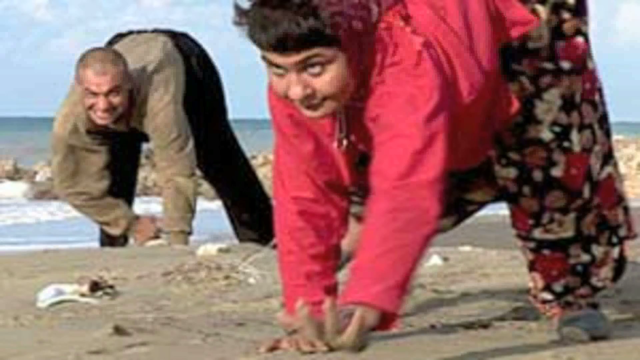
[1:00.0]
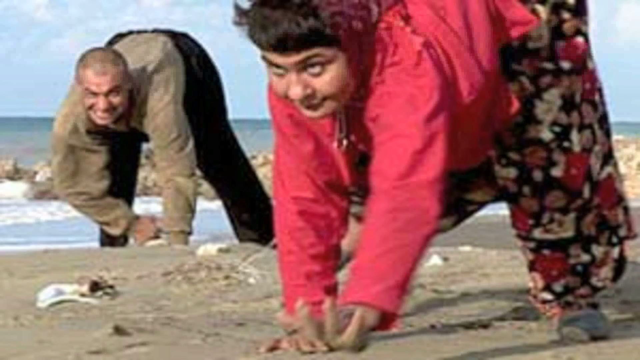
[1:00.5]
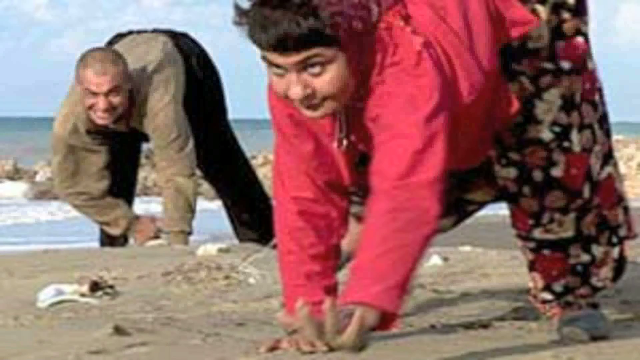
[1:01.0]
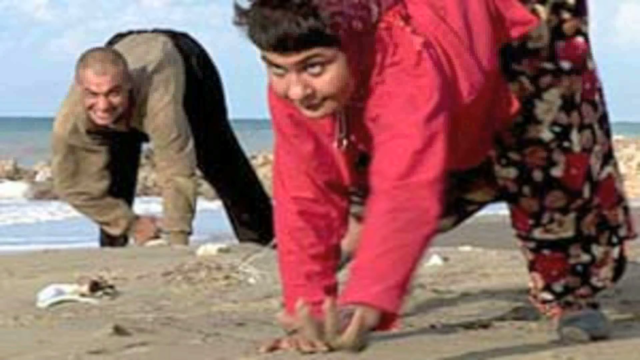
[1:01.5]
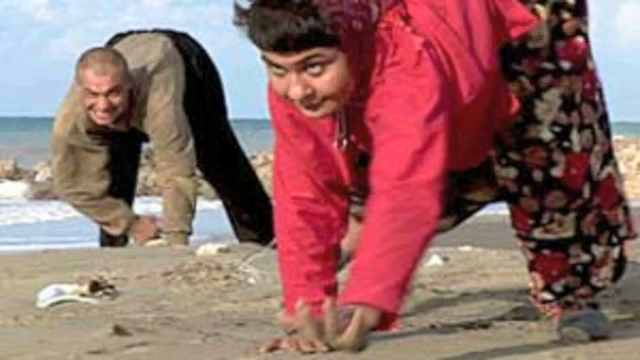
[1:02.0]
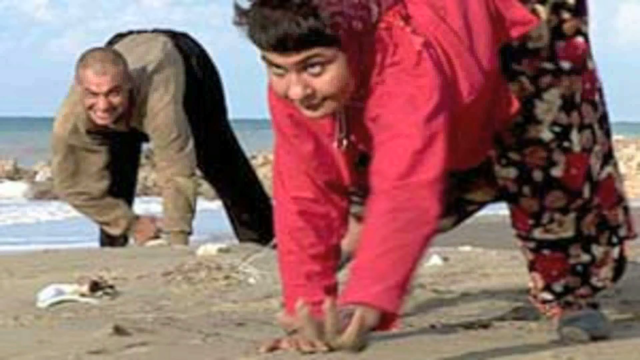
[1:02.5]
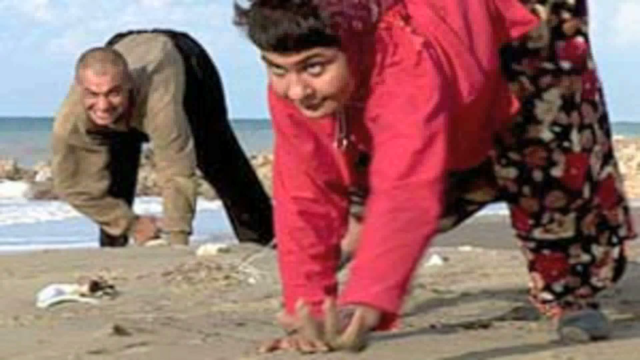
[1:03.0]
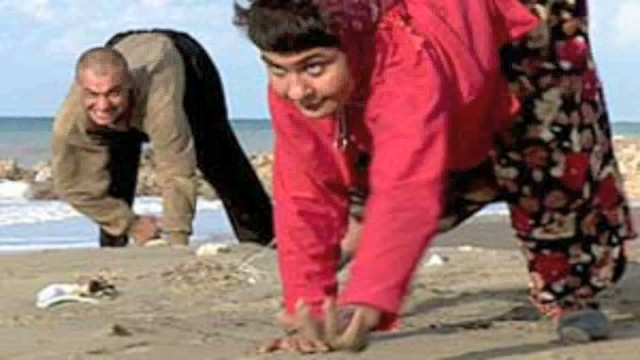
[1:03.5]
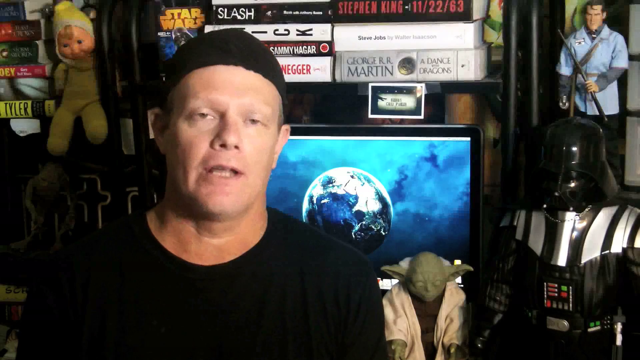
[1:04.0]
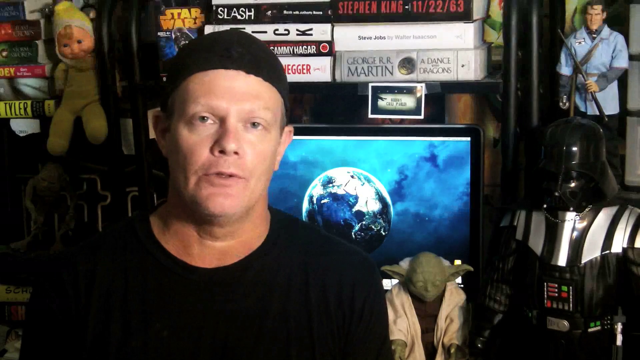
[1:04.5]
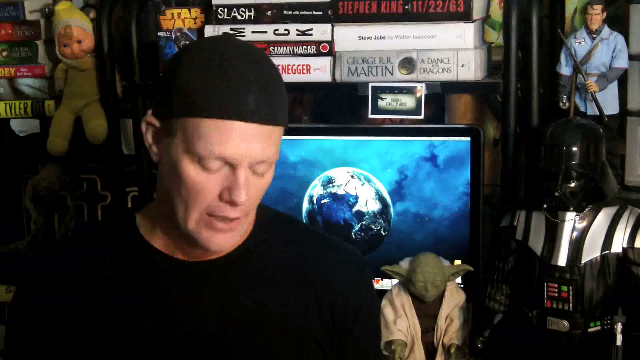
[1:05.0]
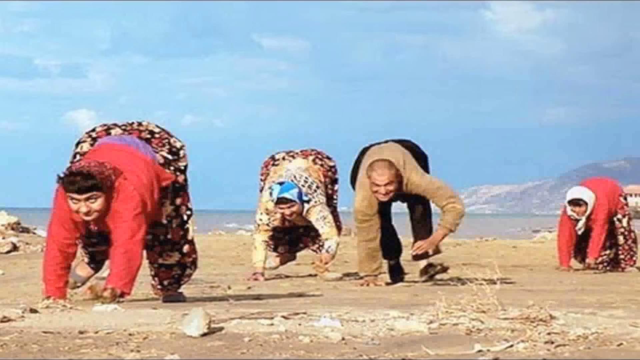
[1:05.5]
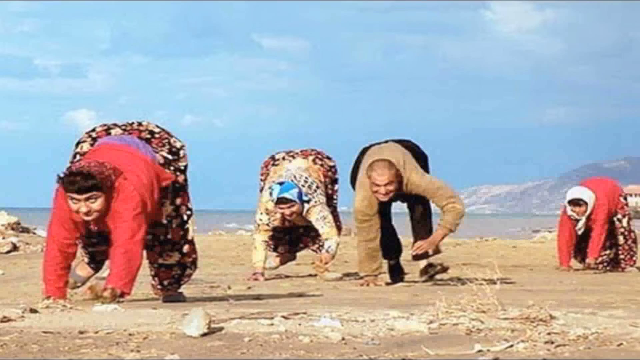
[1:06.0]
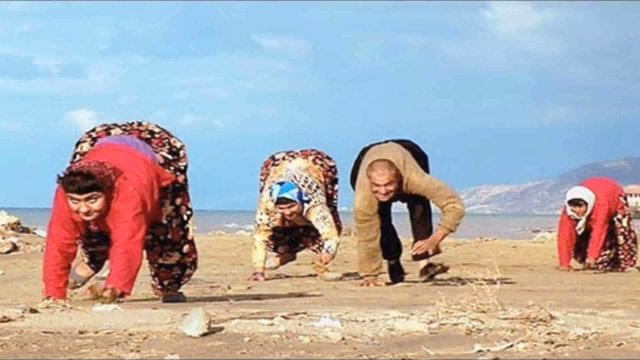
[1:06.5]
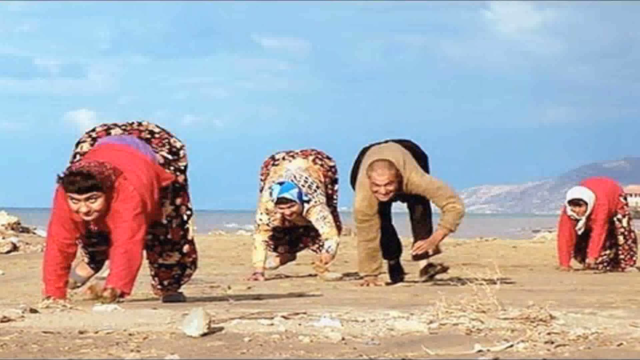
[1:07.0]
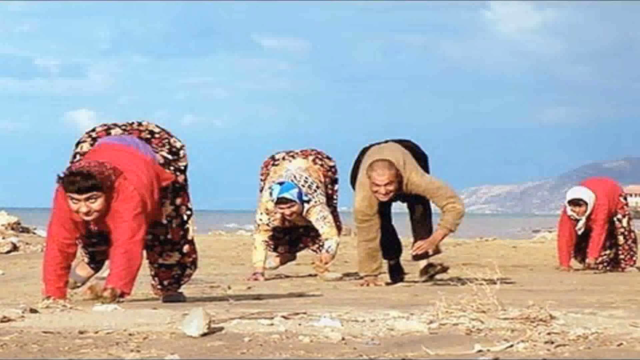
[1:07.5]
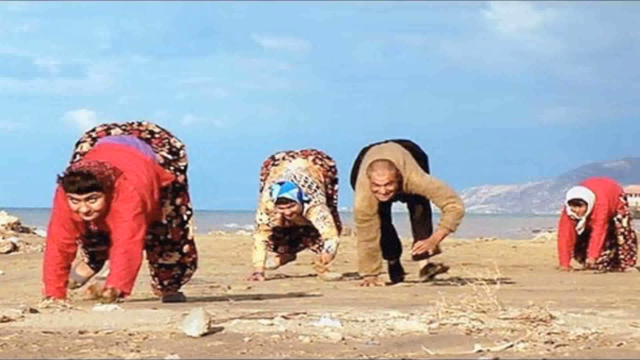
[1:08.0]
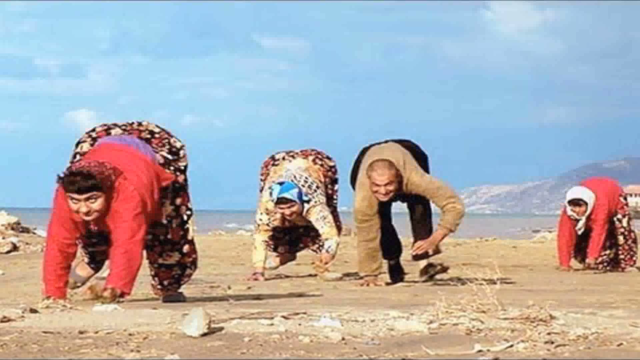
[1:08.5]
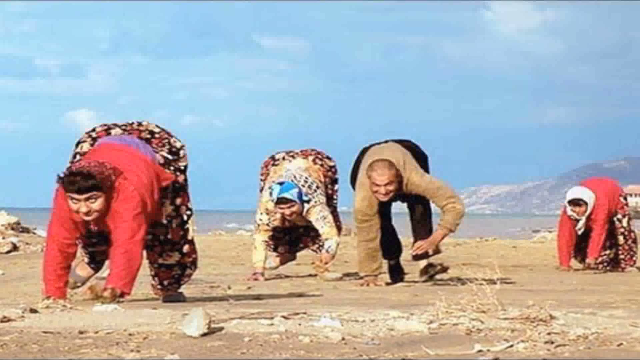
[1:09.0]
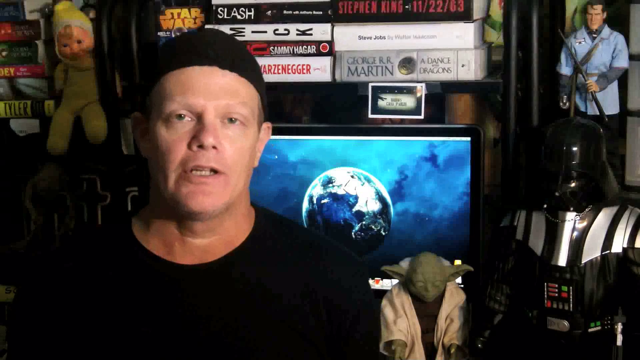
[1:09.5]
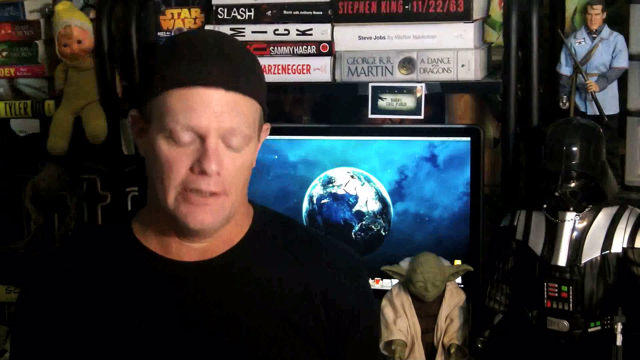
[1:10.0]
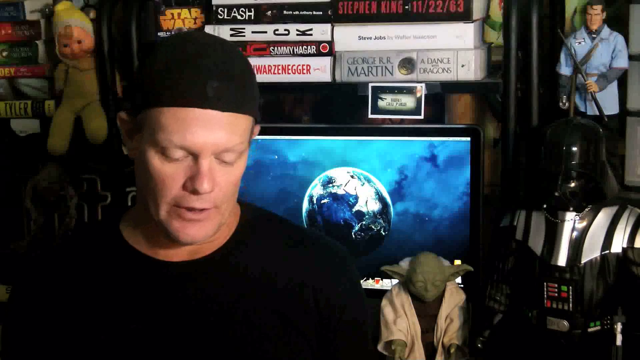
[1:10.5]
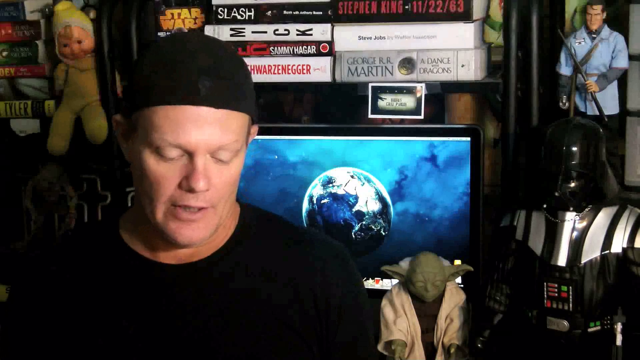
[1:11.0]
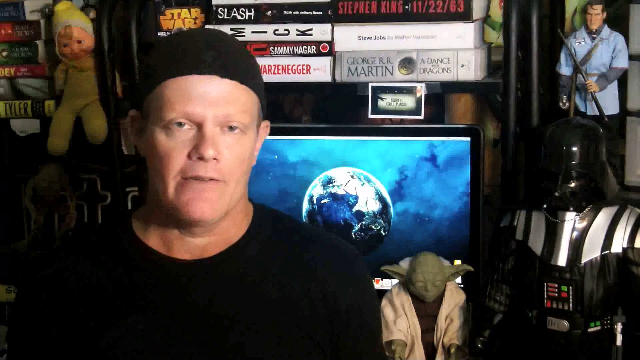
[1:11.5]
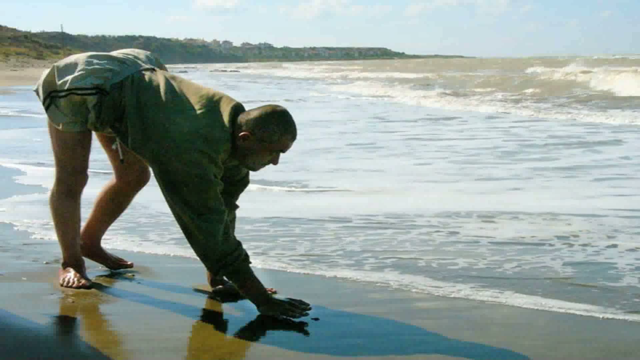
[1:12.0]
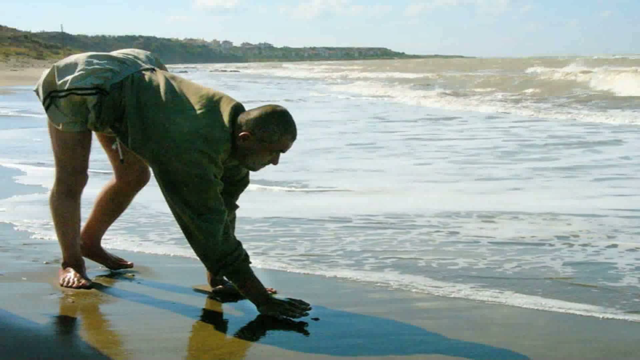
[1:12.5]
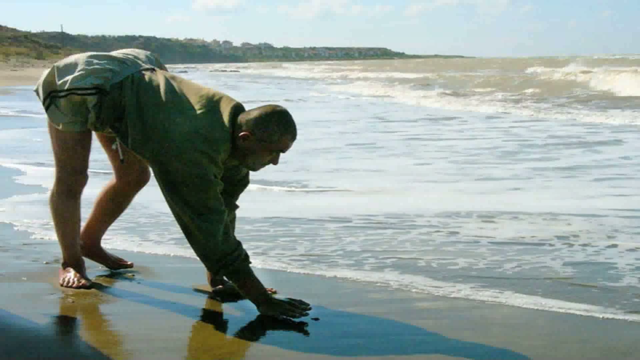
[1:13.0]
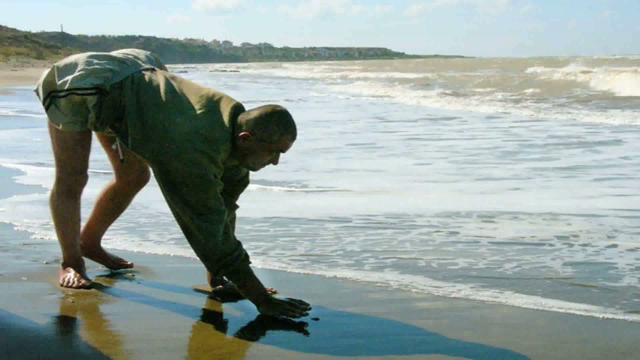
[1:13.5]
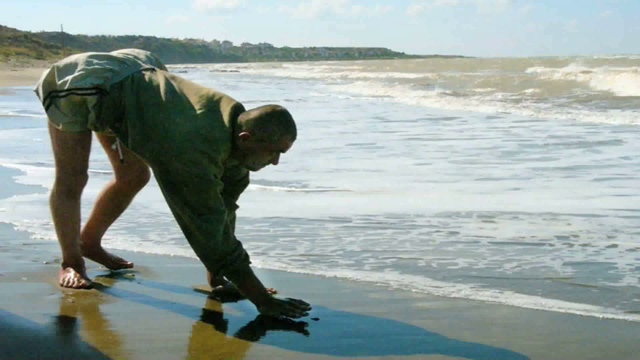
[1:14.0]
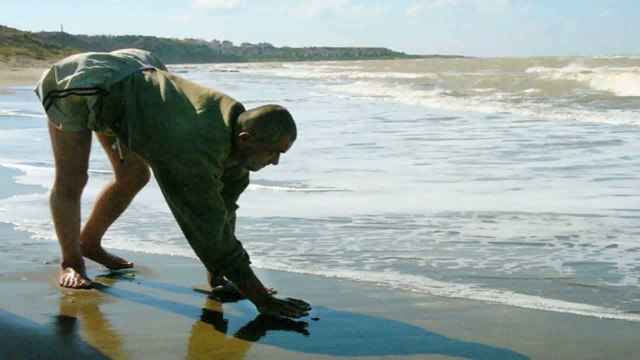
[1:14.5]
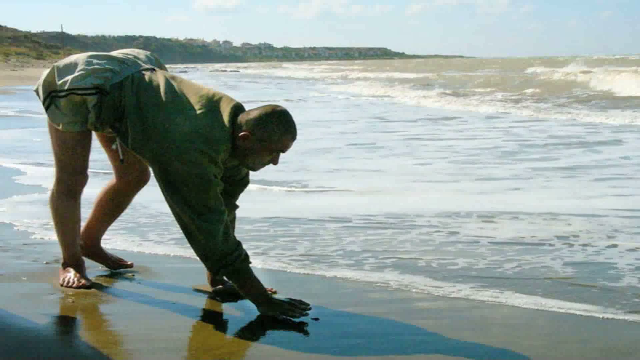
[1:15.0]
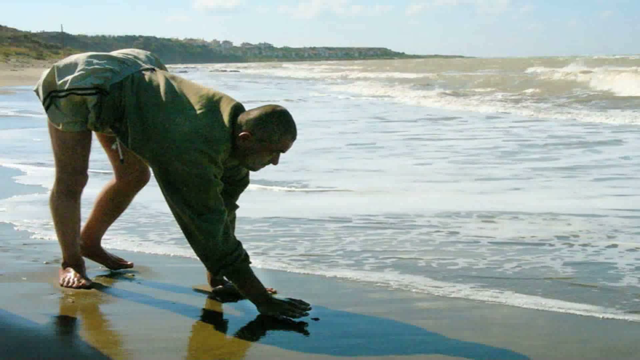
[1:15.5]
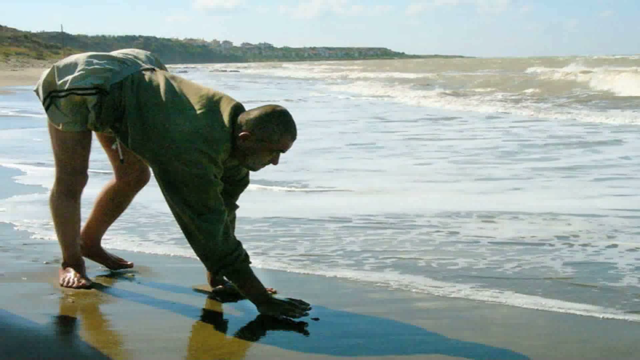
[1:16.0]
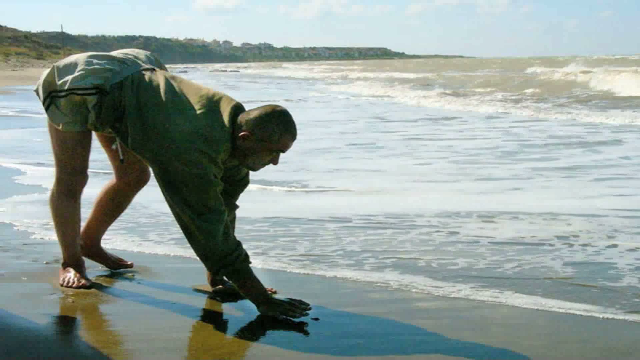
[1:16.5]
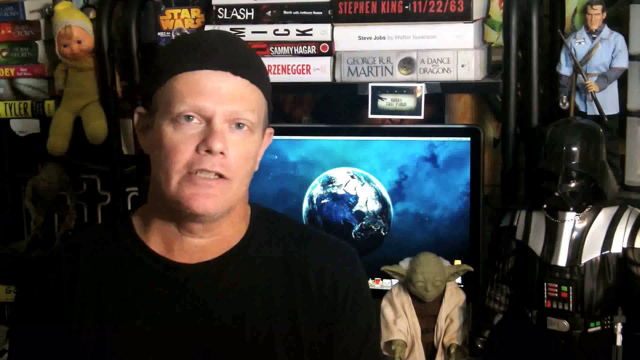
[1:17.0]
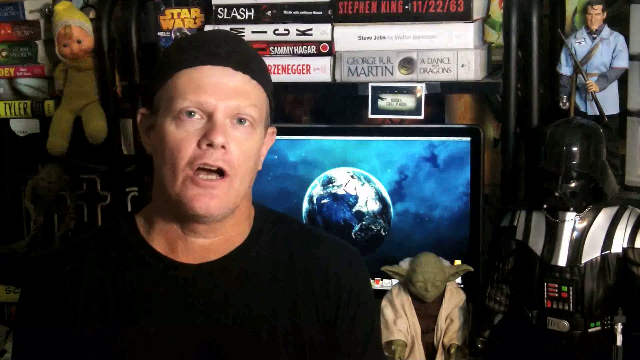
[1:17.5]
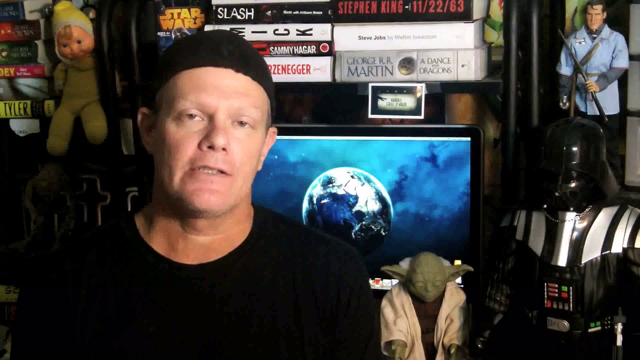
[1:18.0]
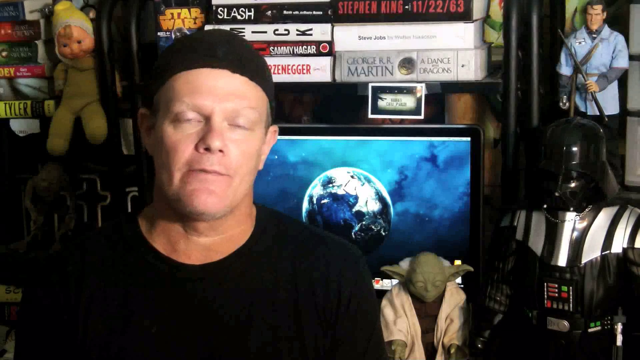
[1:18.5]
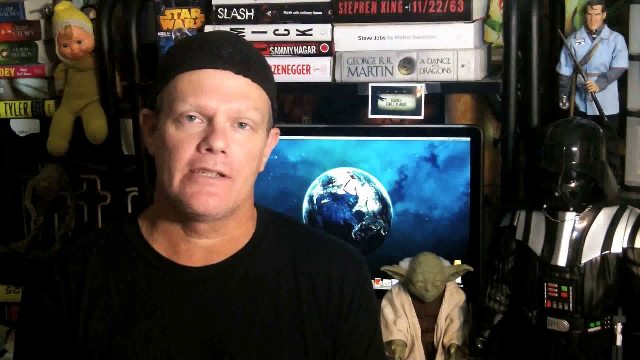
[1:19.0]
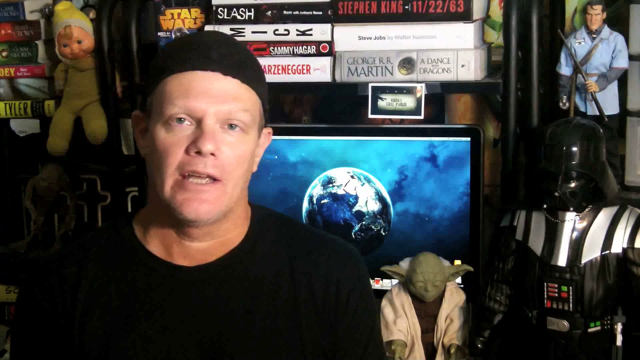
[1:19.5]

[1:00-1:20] A man on the left wears a brown jacket and a woman on the right wears a red shirt; they are on some kind of beach, with water falling around. The man appears again in front of a TV screen with a picture of a globe, with figurines of Darth Vader and Yoda, a toy figure, and some DVDs and other items above his head. Another picture shows four people walking like animals on their hands, and another man walks on his hands with his back high, like a cat, on the shore. The video then returns to the man.